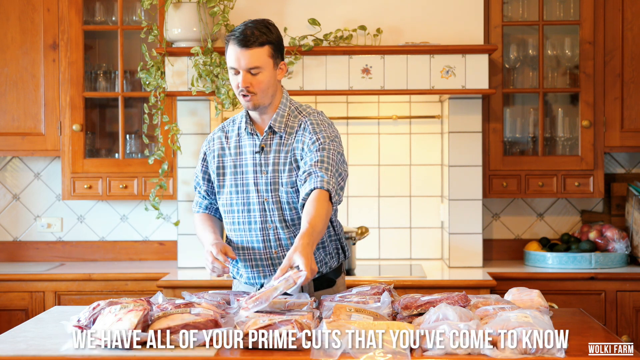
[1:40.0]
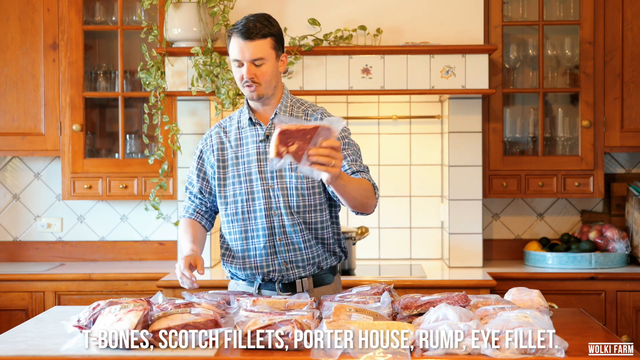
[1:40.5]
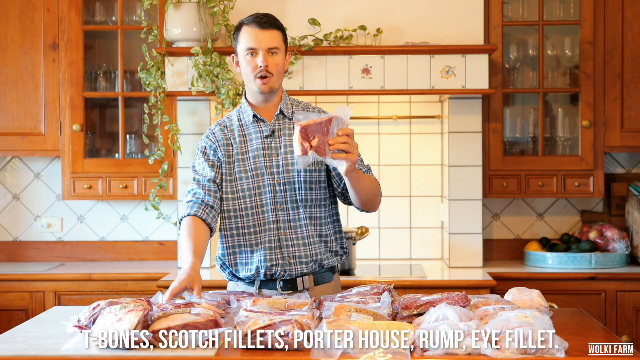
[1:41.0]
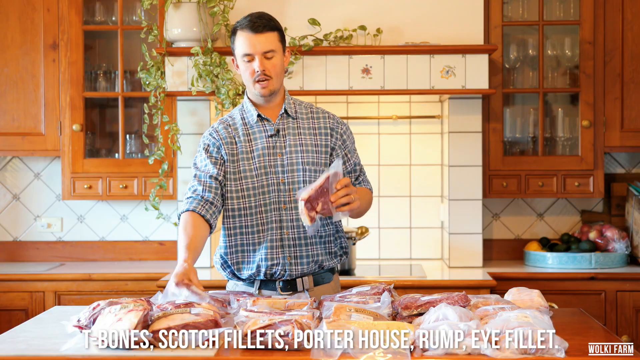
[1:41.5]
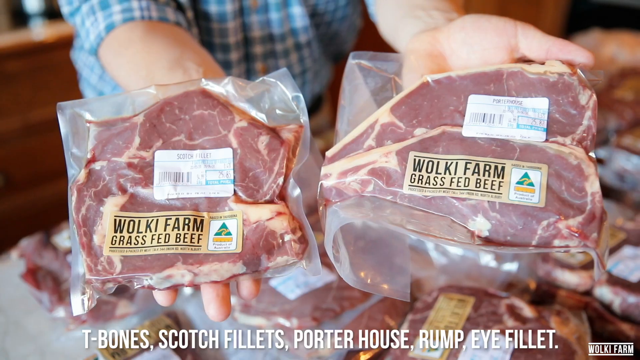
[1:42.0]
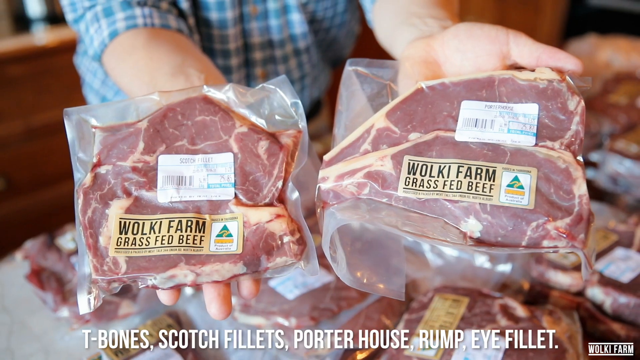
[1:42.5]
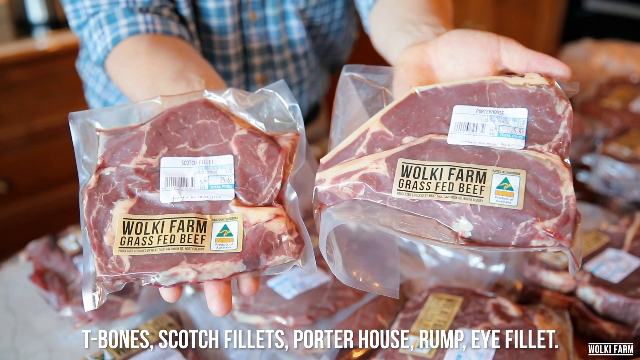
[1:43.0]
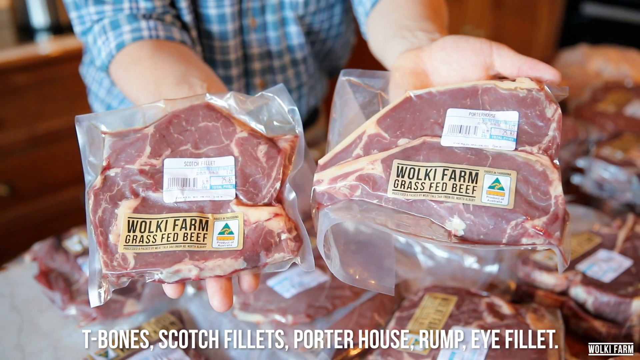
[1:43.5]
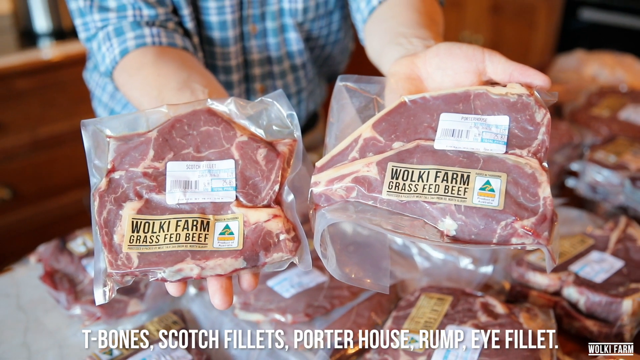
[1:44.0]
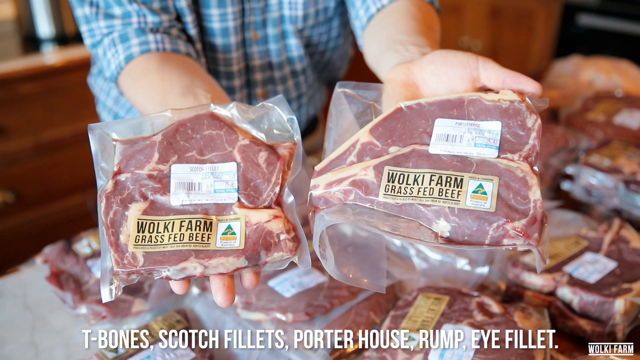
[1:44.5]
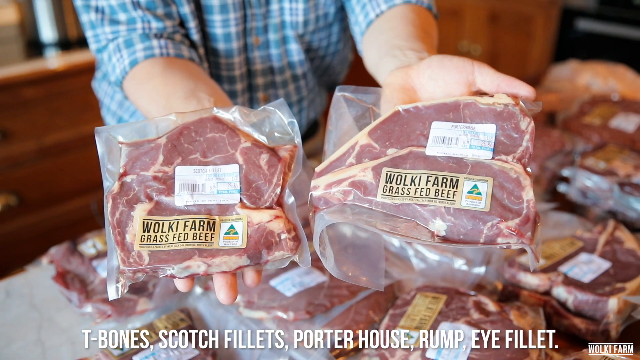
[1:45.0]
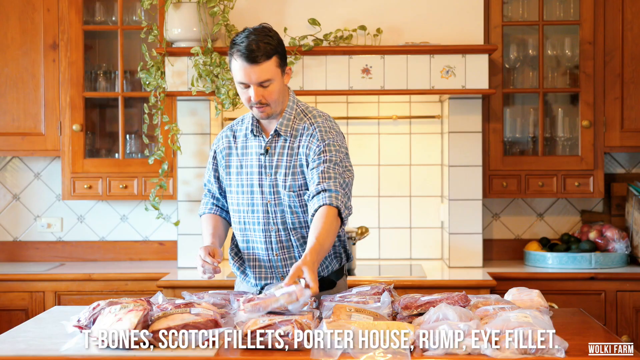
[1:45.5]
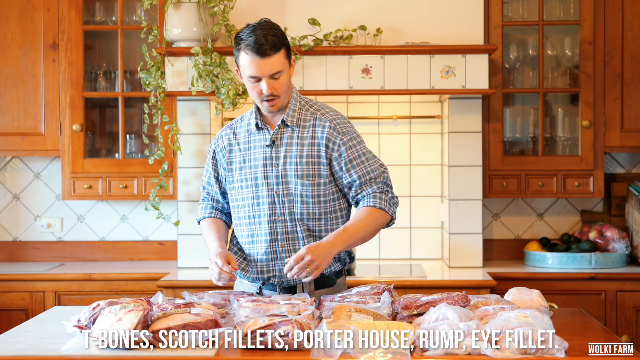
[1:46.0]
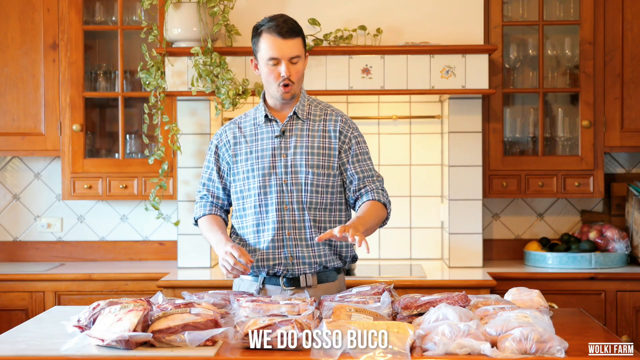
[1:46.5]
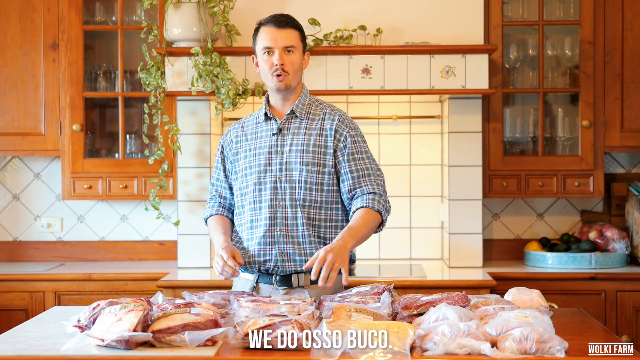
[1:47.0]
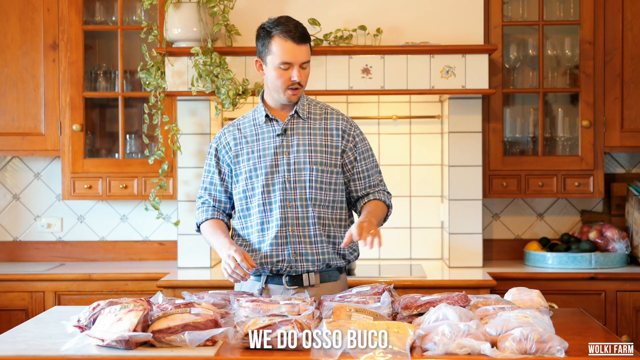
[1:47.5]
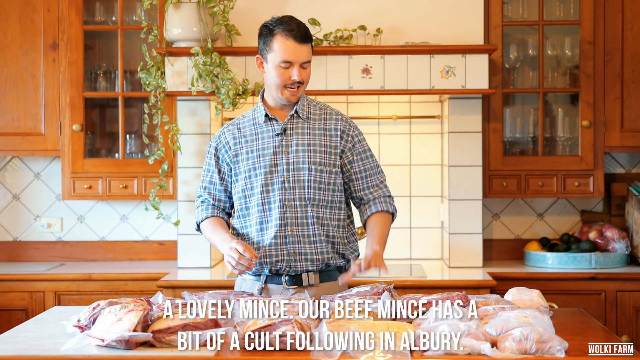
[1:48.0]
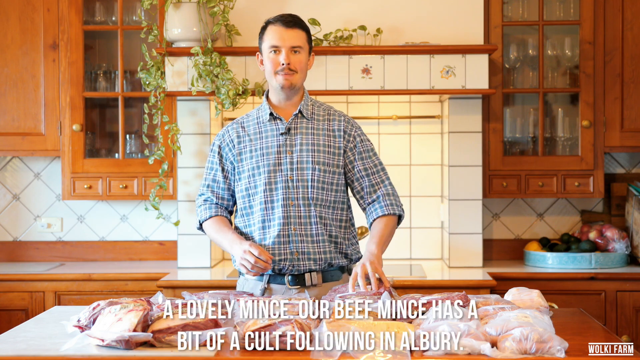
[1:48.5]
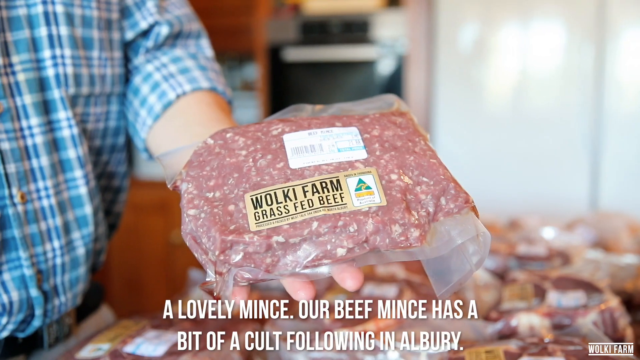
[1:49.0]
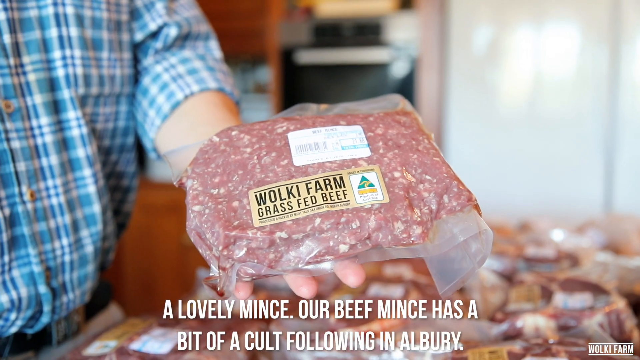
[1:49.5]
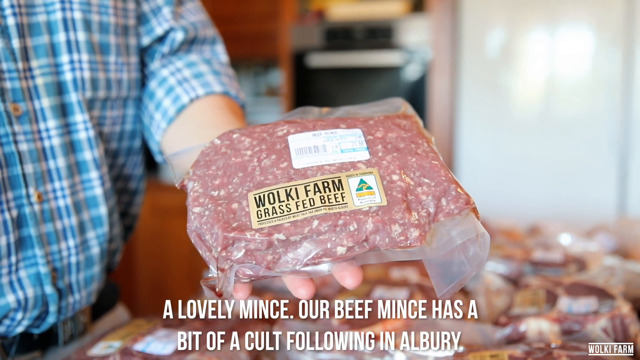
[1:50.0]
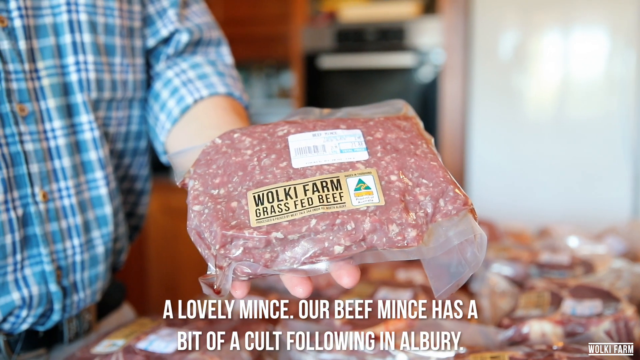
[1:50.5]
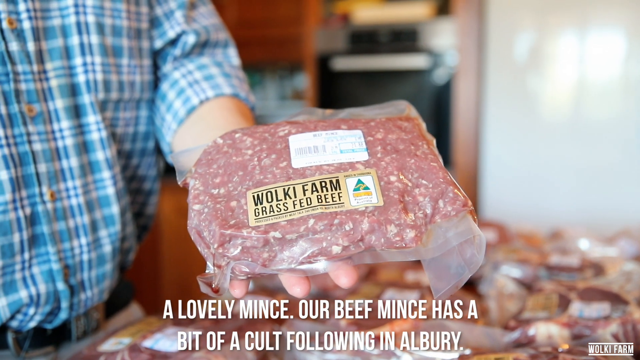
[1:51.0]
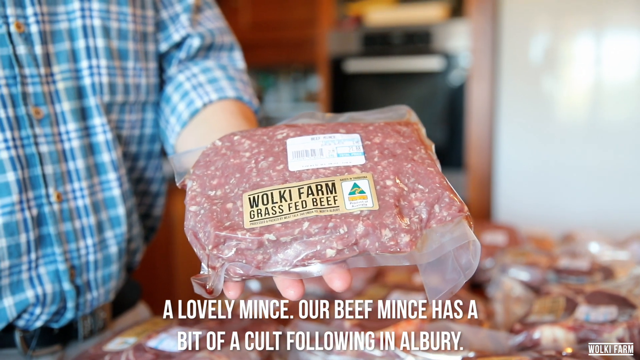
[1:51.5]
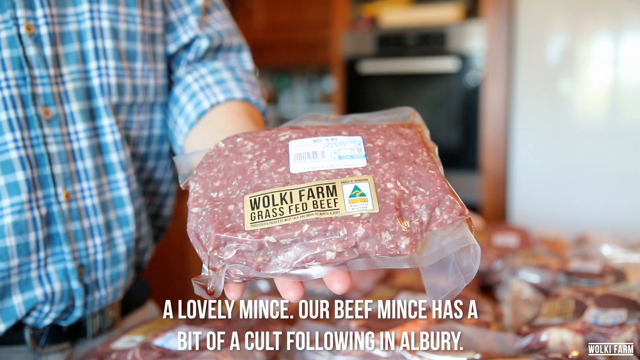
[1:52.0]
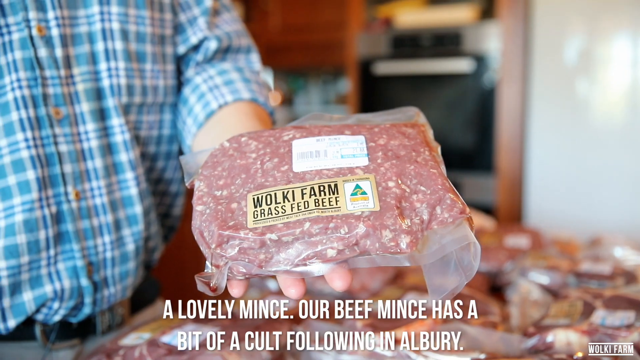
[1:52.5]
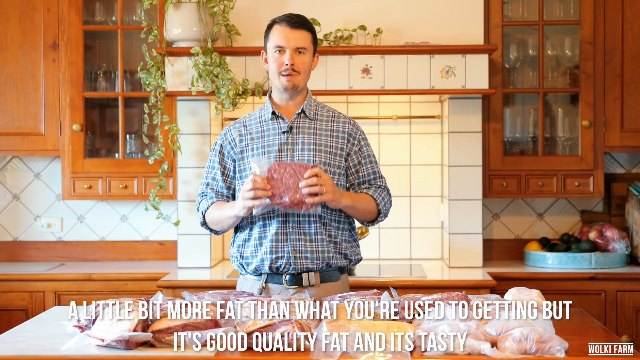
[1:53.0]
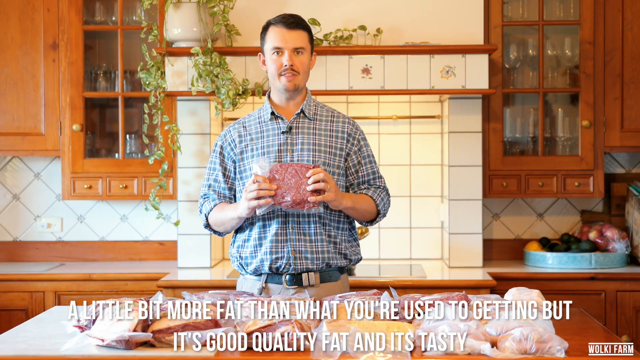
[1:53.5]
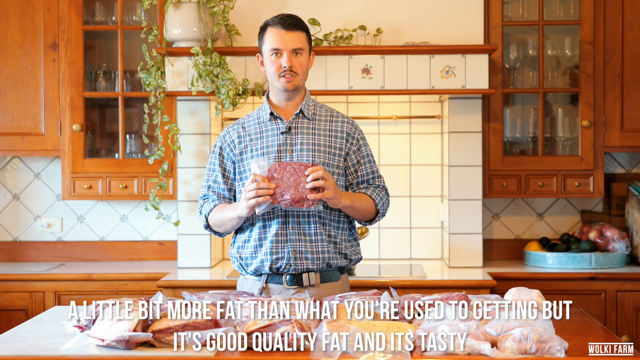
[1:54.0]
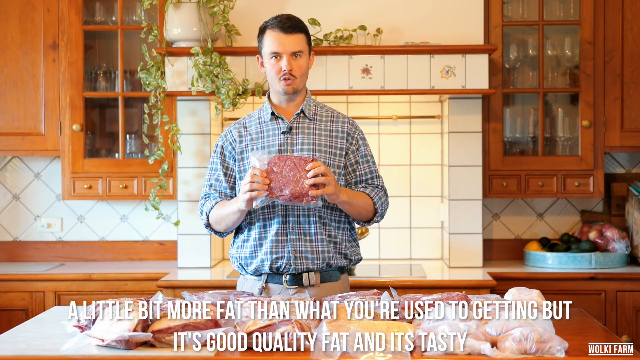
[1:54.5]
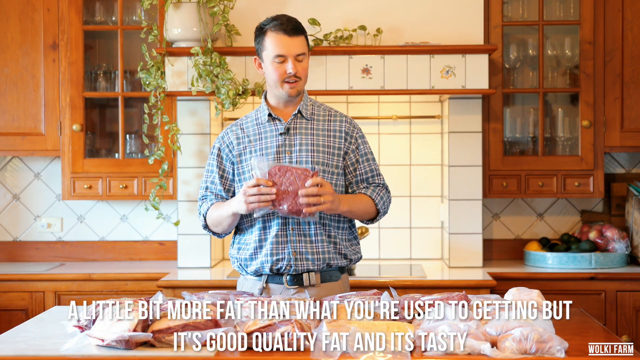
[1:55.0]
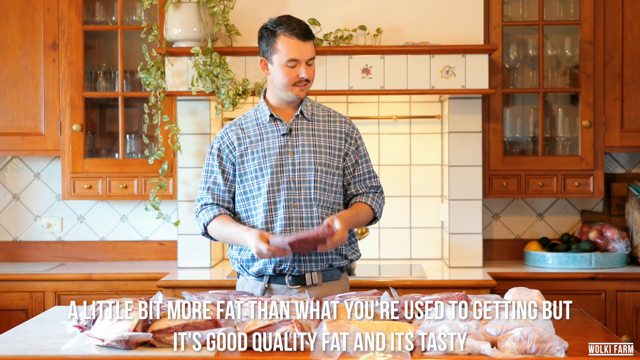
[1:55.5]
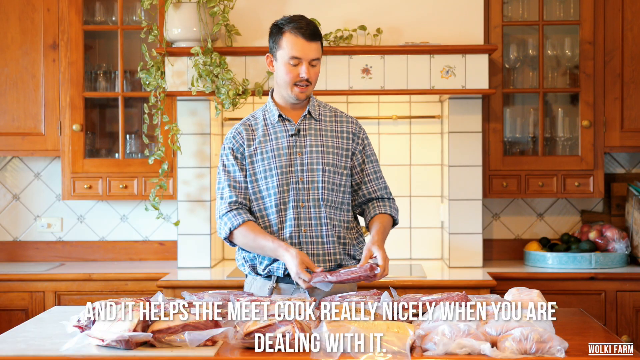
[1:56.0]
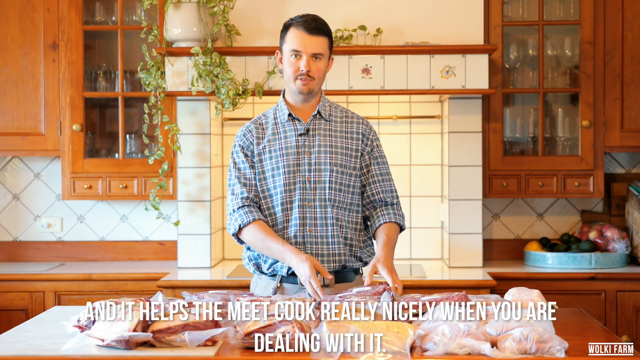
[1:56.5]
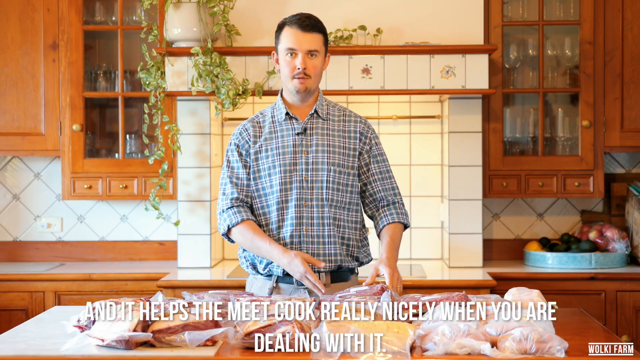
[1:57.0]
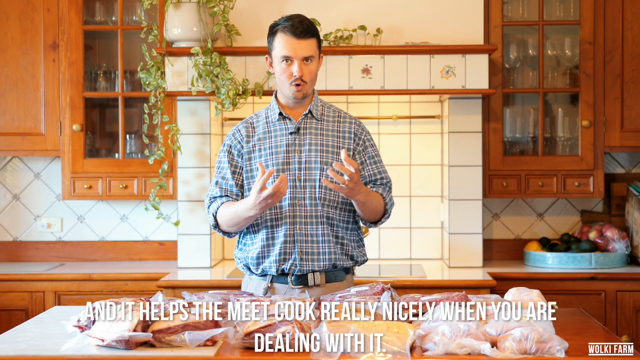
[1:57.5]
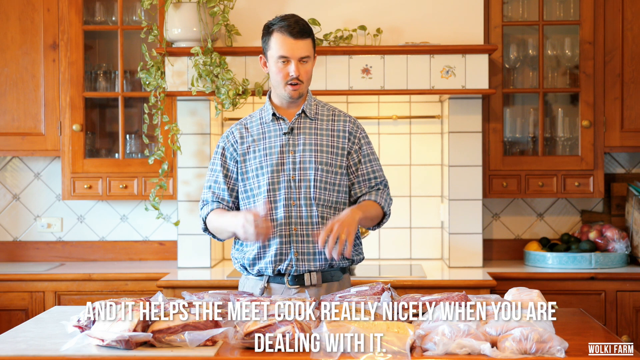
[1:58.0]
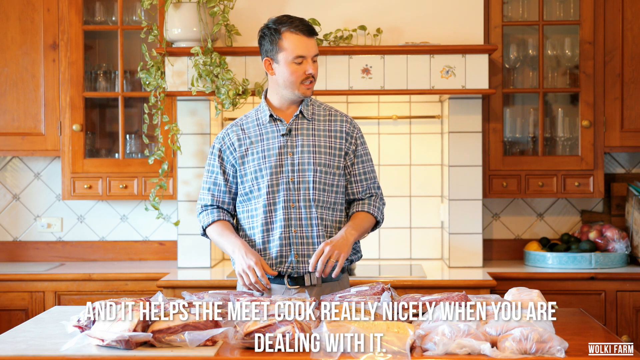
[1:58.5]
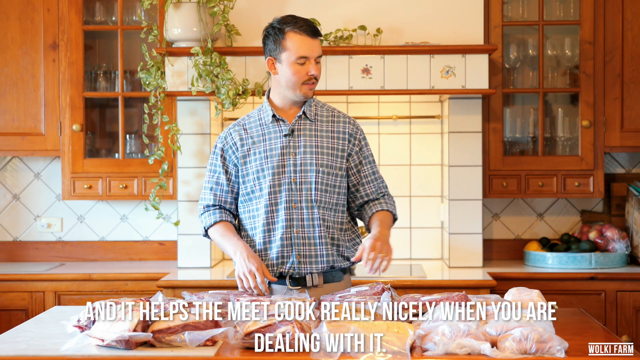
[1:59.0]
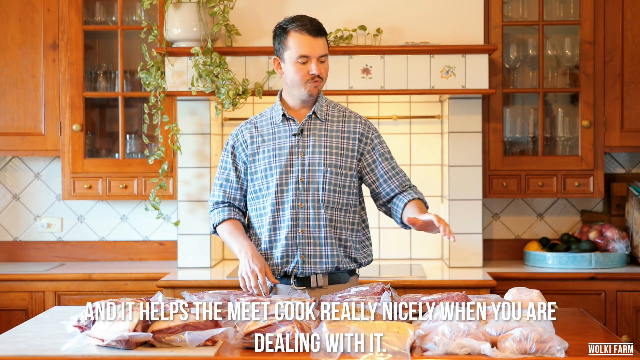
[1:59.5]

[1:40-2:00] Jacob picks up two other things, one in each hand, as the captions list "T-bone, scotch fillet, porterhouse, rump, eye fillet", so these seem to be steaks. He then talks about "a lovely mince" with "a bit more fat than what you're used to getting but it's good quality" and "it's tasty", picking up the mince and putting it down again. The mince looks like nice quality and does not look full of gristle. In the background there are cream tiles on the walls, and the kitchen itself is pine. A few of the tiles show a logo, possibly leaves, though it is hard to tell from this distance.